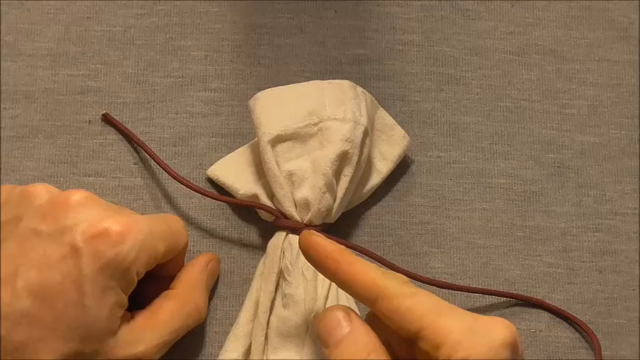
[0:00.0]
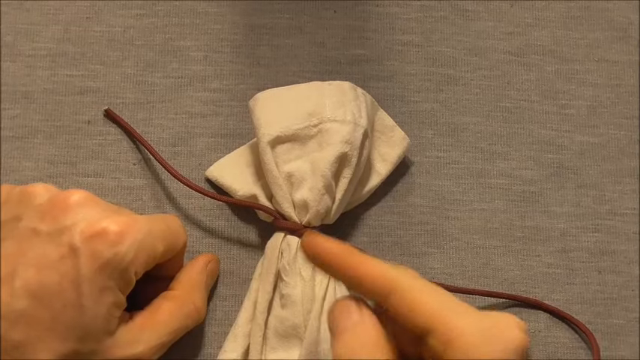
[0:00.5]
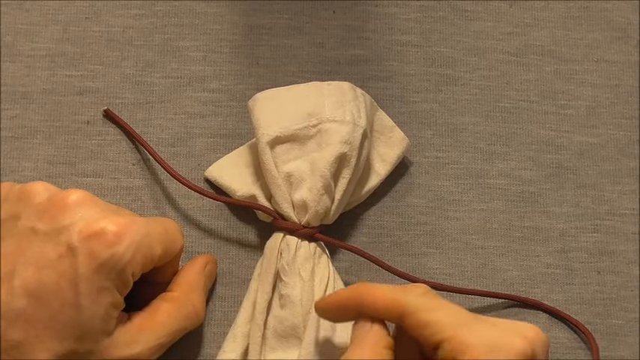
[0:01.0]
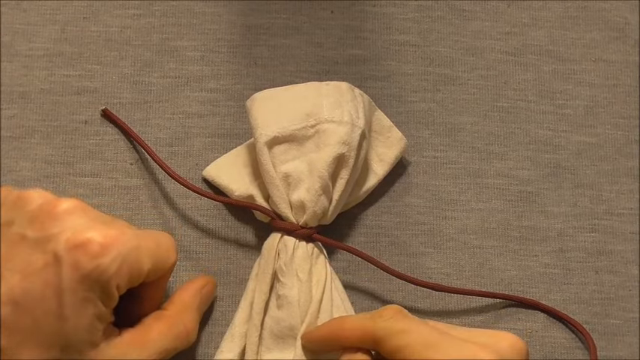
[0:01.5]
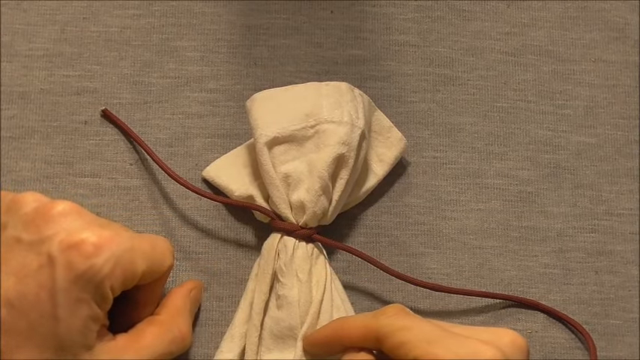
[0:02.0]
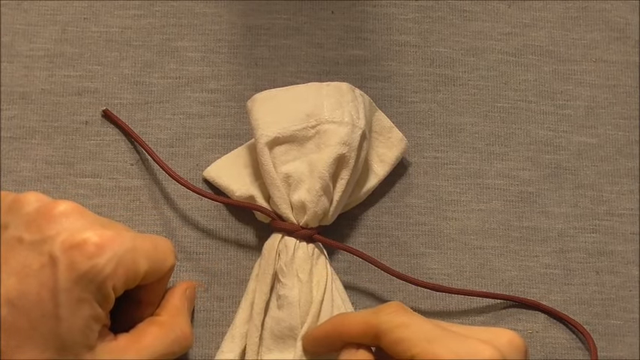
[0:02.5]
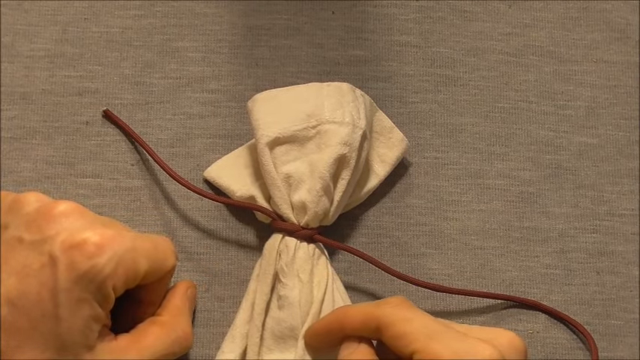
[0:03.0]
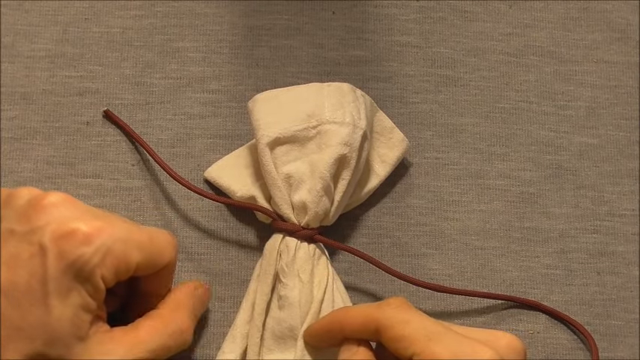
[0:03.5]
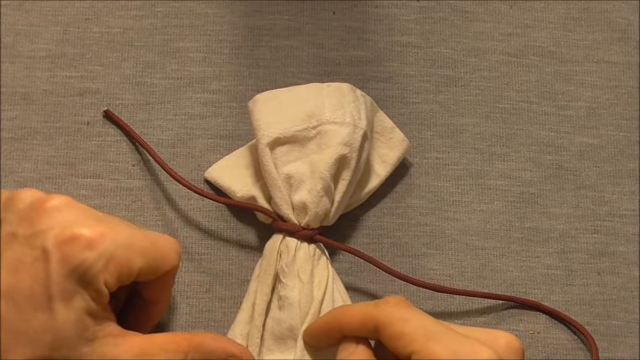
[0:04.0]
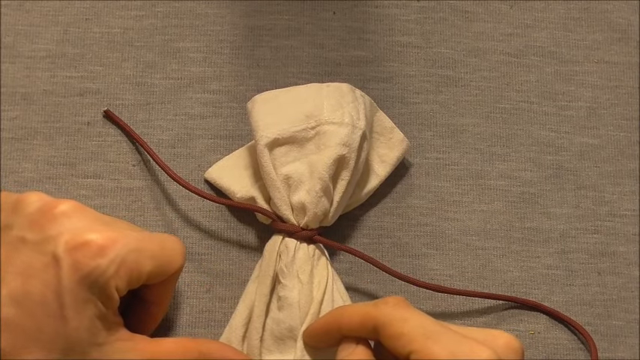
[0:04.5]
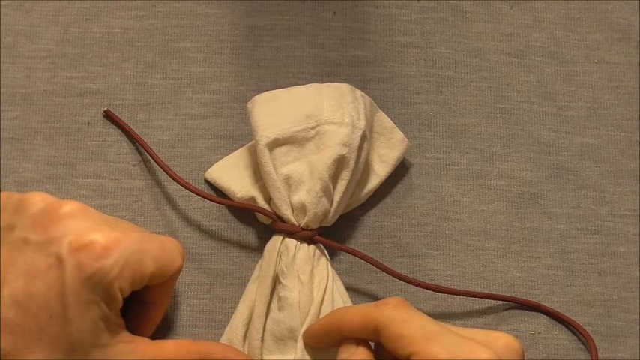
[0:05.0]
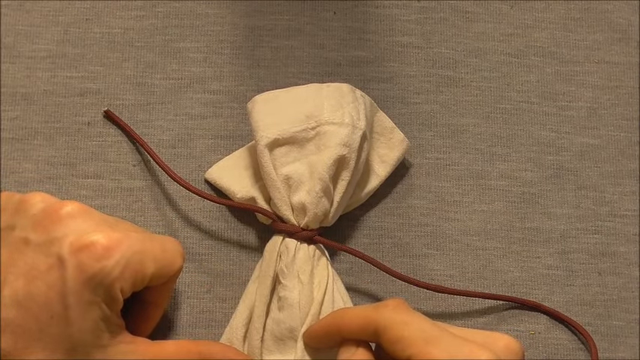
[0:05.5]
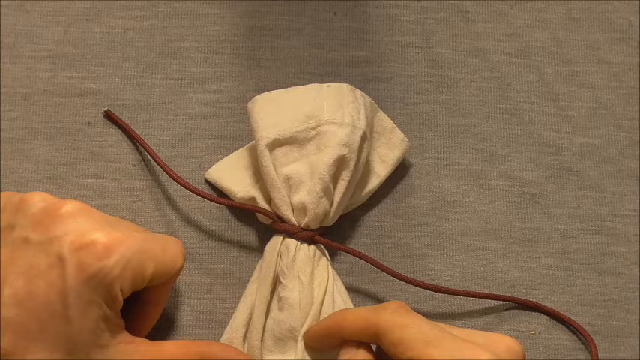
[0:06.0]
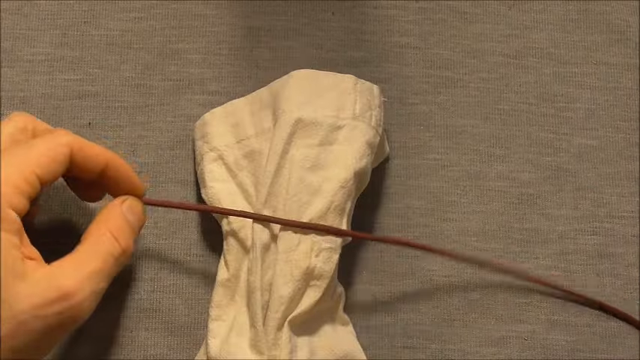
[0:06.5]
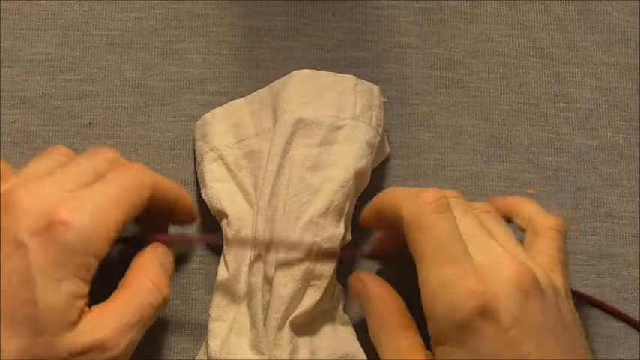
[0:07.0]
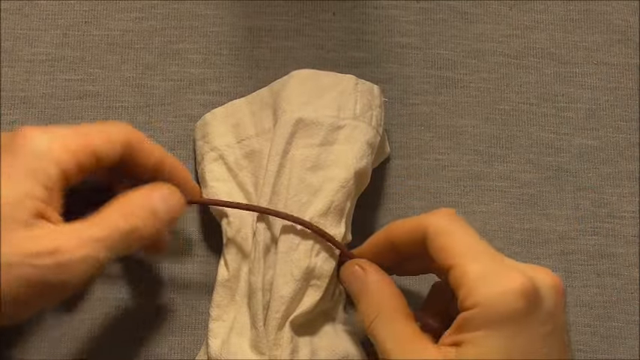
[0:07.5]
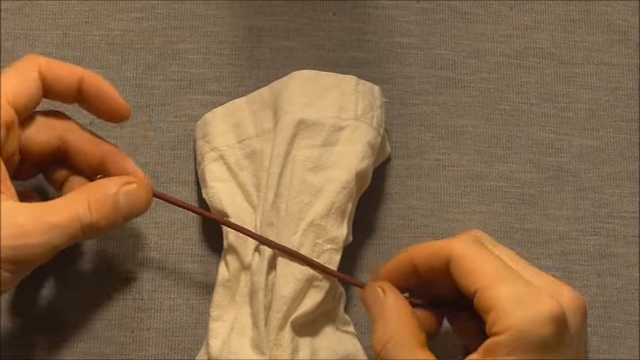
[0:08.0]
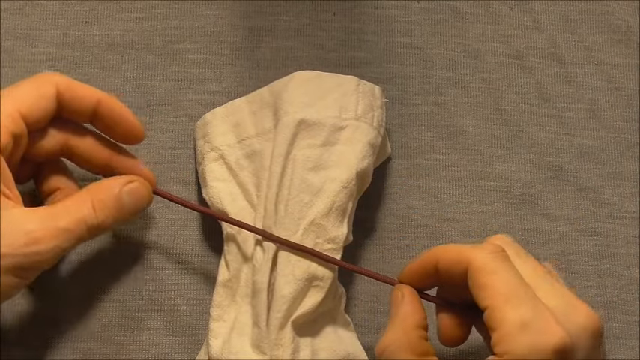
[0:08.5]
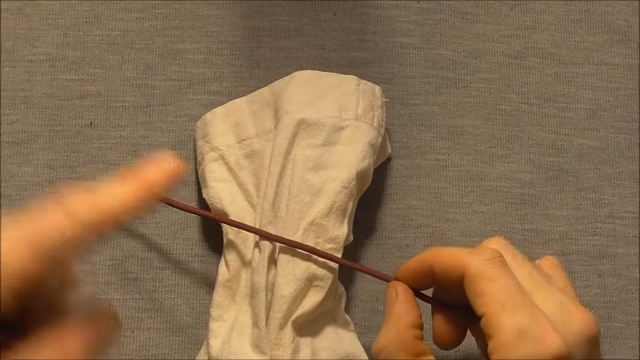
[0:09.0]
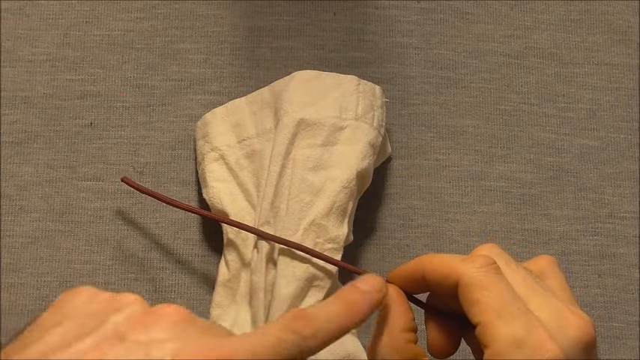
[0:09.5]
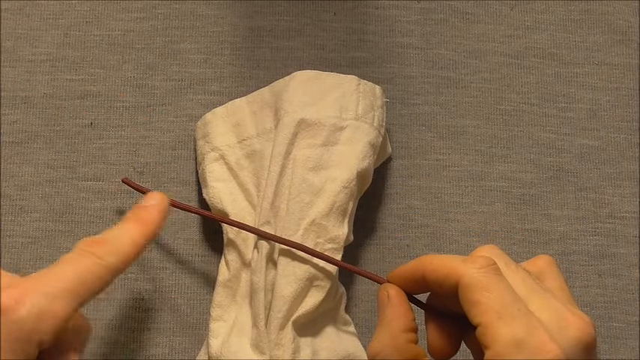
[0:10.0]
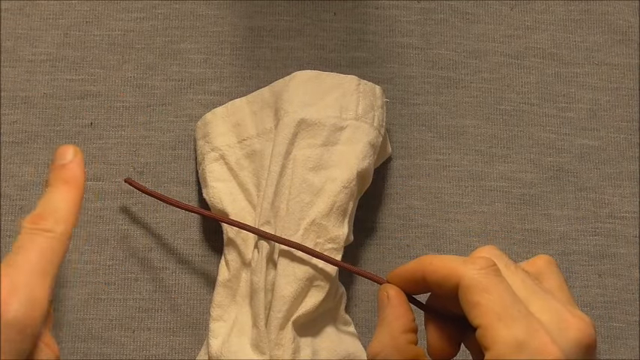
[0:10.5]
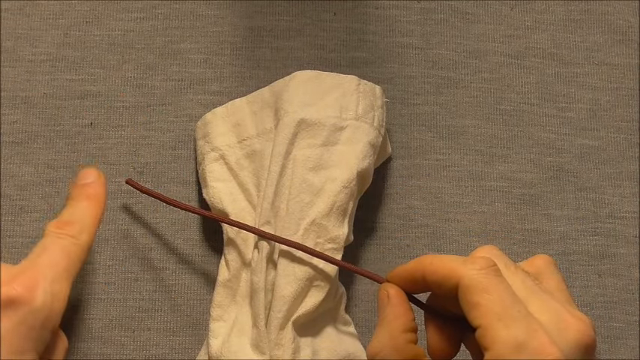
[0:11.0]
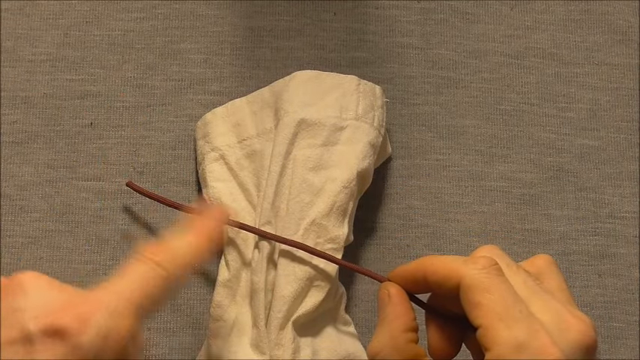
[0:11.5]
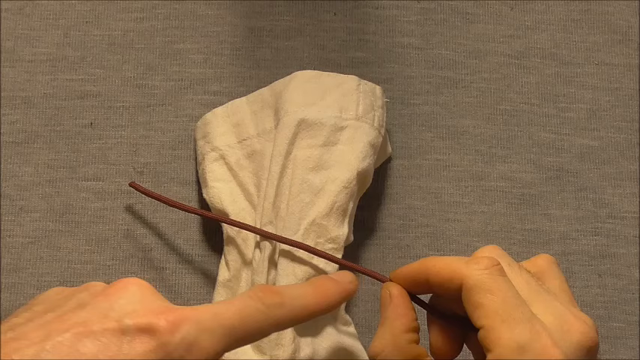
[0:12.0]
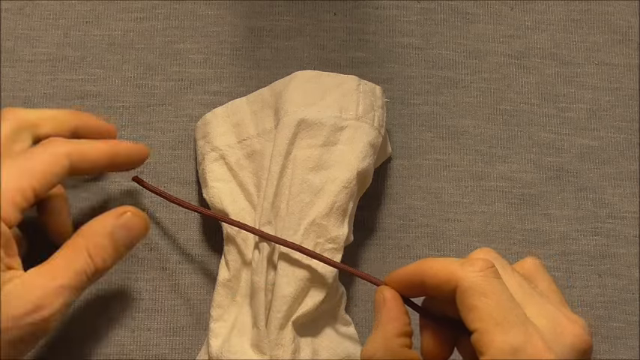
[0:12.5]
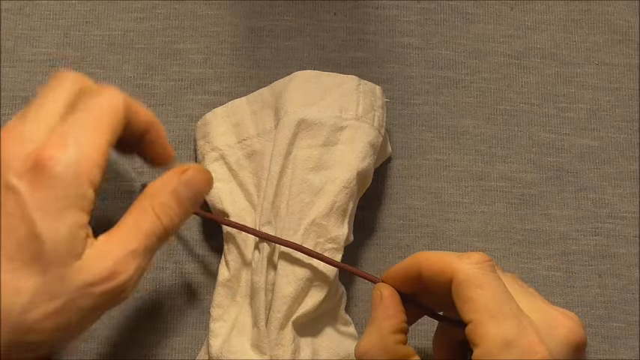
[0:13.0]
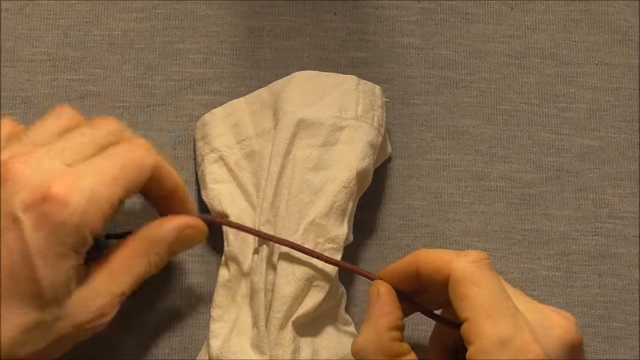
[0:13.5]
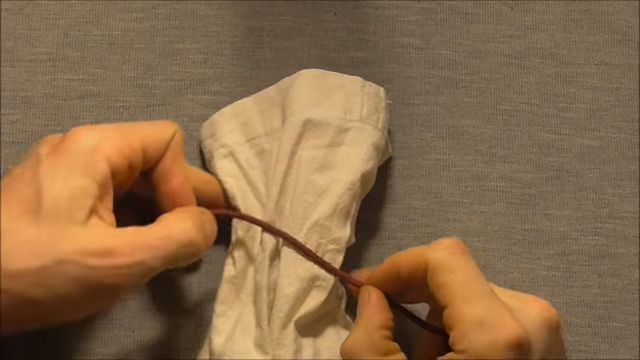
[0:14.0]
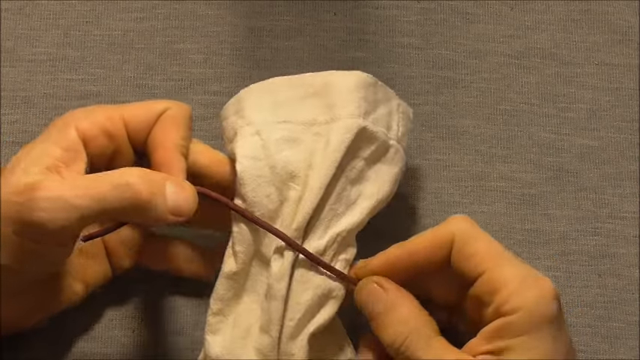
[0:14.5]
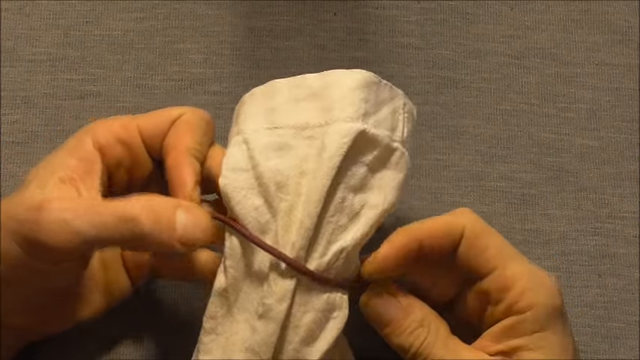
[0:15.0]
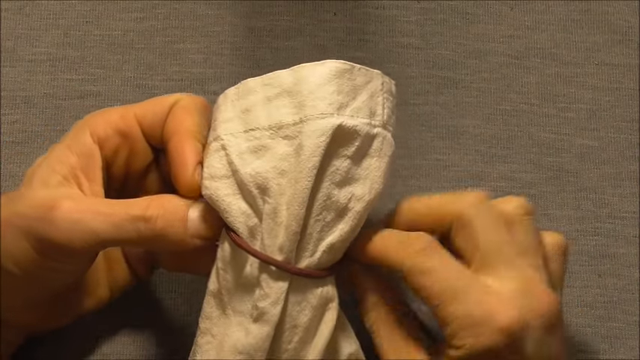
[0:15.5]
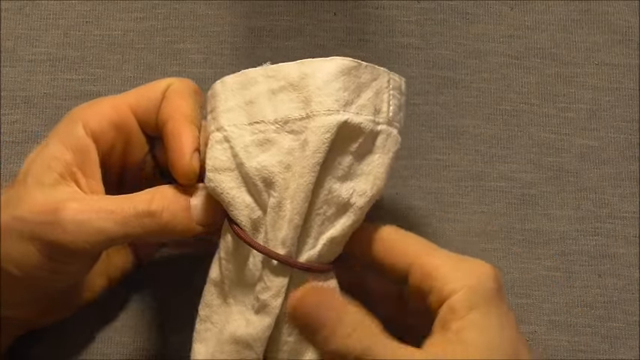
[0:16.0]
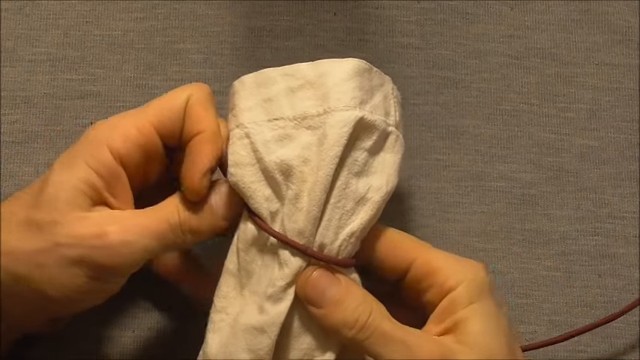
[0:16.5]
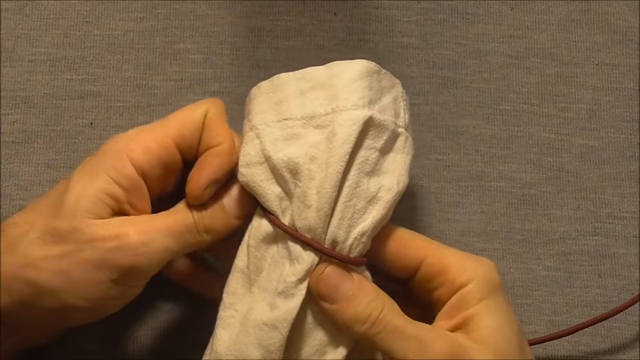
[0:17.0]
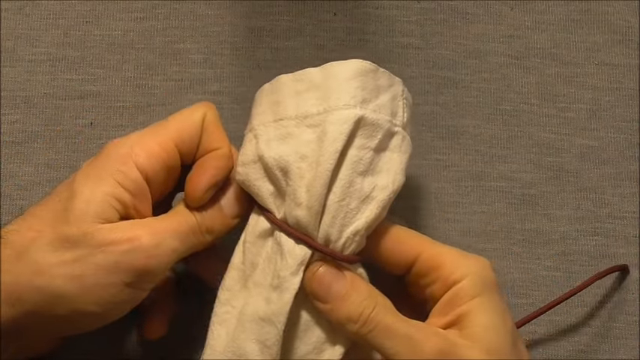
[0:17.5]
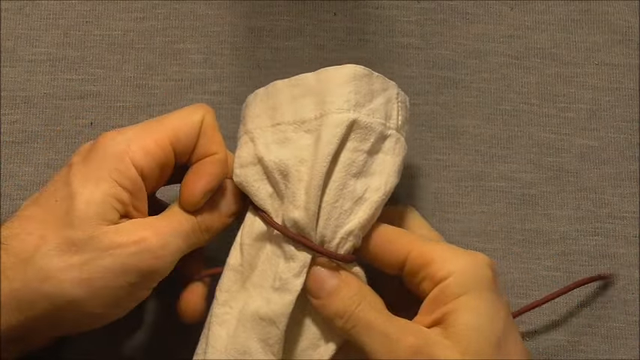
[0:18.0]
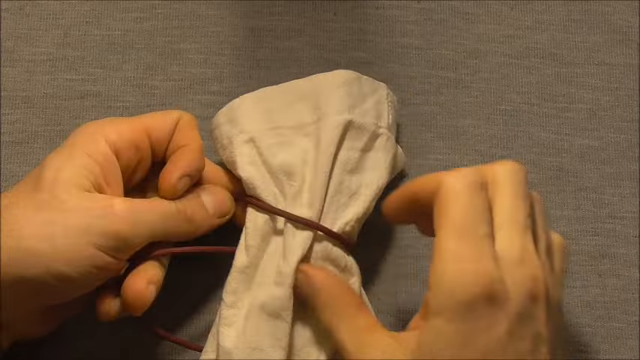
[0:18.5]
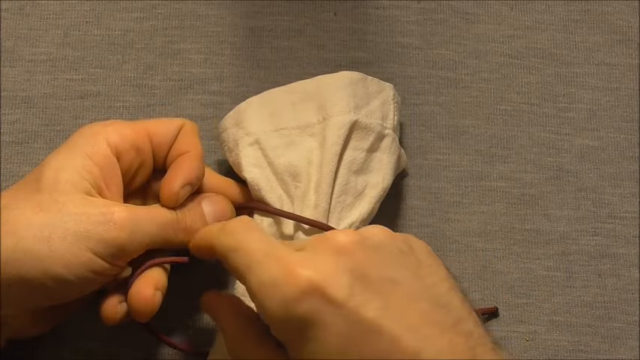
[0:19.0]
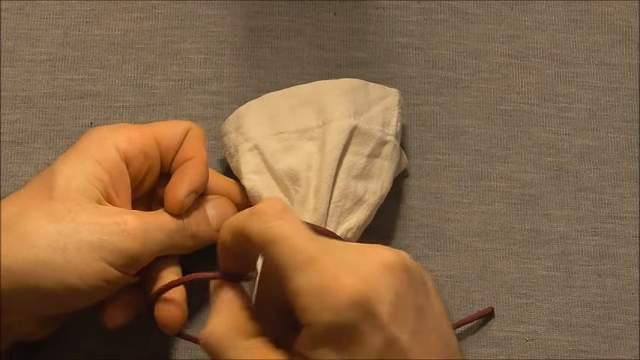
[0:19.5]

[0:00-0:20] Two hands, probably male and light-skinned, hold a piece of beige cloth with a brown string wrapped around it against a dark gray background. The lighting seems to come from above, creating a small shadow behind the cloth. The hands show how the string goes on the cloth, wrapping it around the cloth and trying to make a knot, as if giving instructions on how to tie a knot with the string and the piece of cloth.